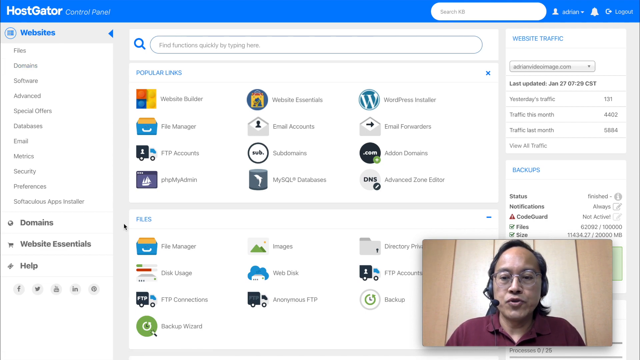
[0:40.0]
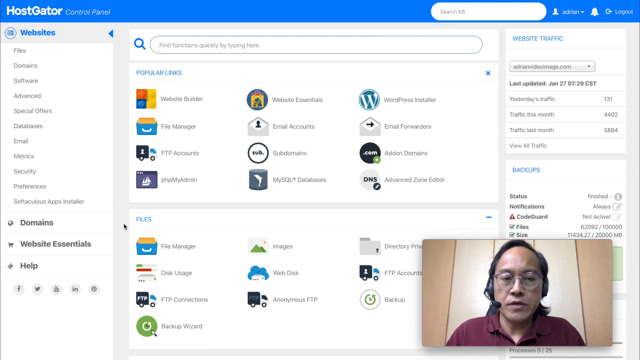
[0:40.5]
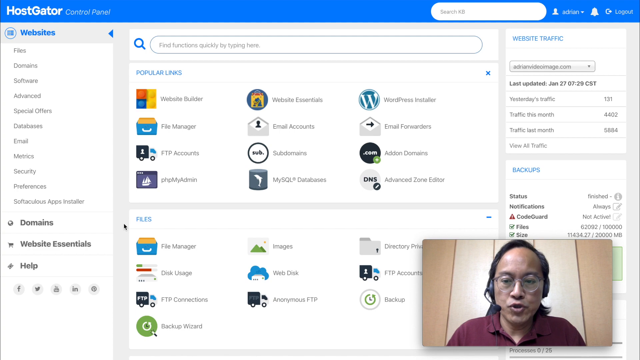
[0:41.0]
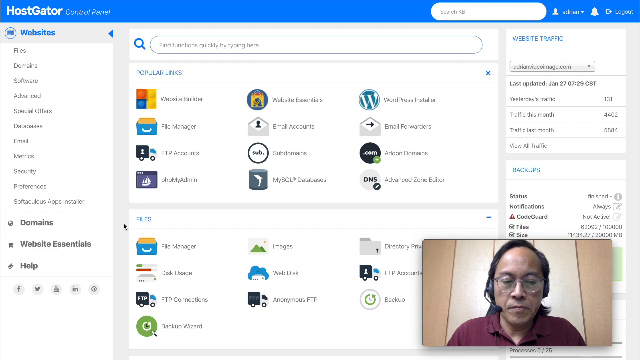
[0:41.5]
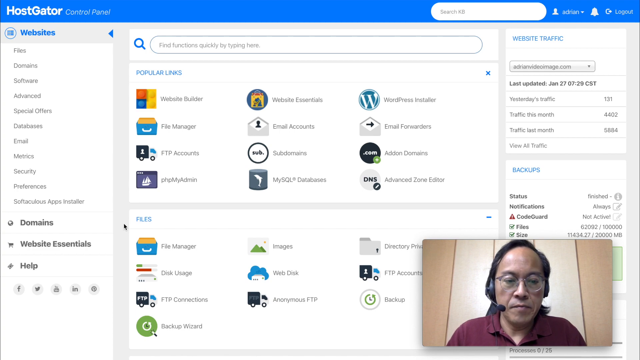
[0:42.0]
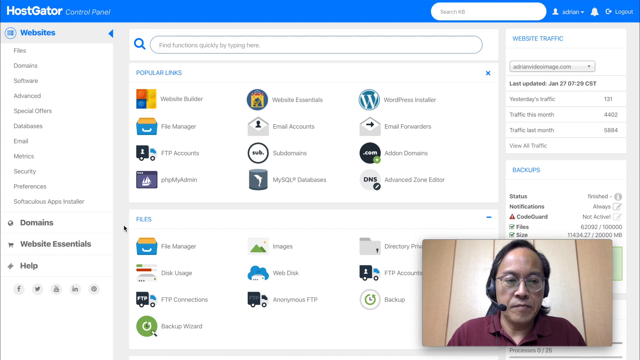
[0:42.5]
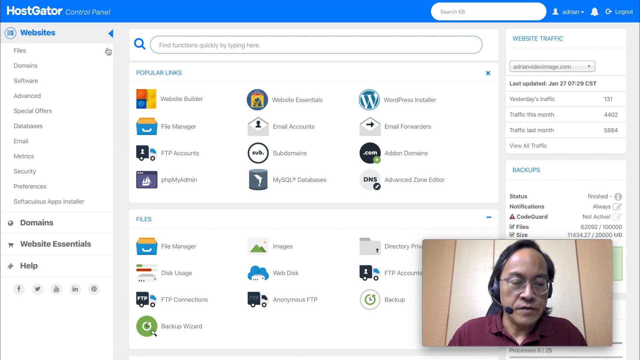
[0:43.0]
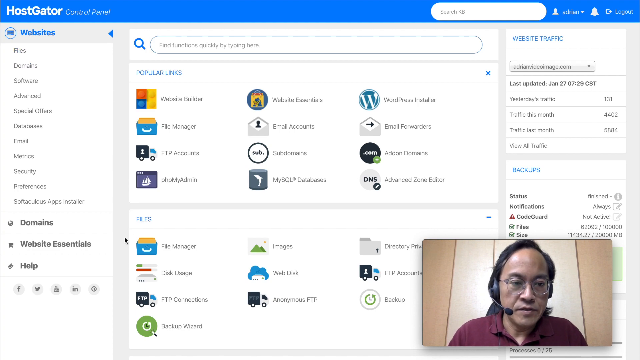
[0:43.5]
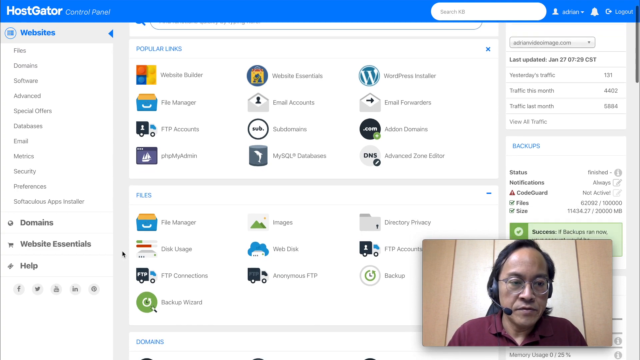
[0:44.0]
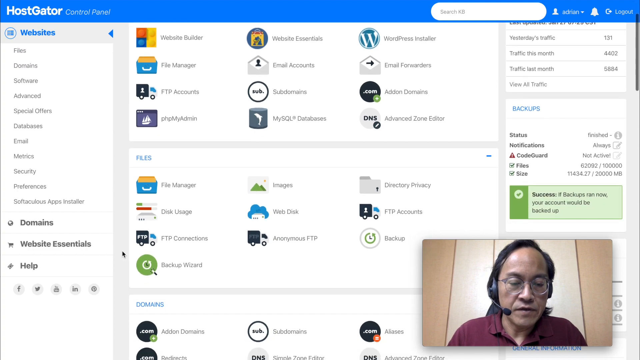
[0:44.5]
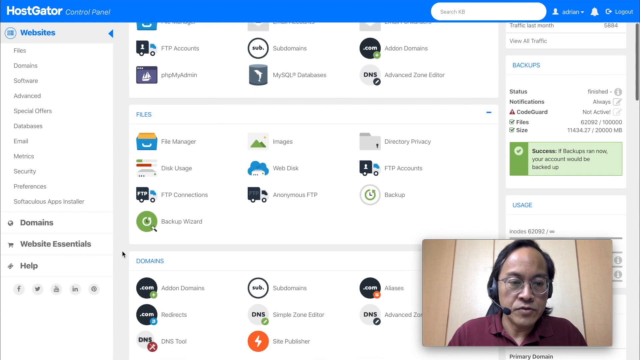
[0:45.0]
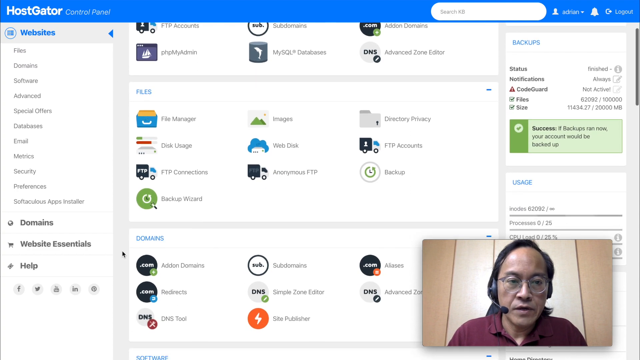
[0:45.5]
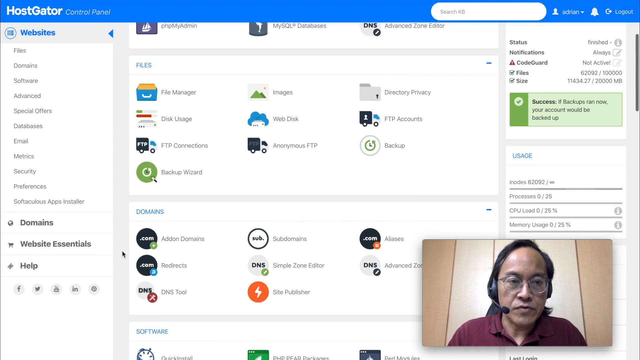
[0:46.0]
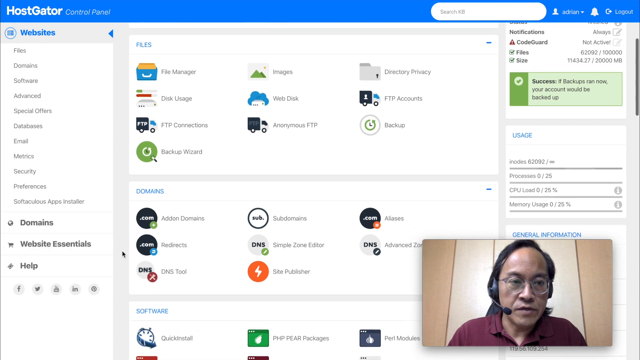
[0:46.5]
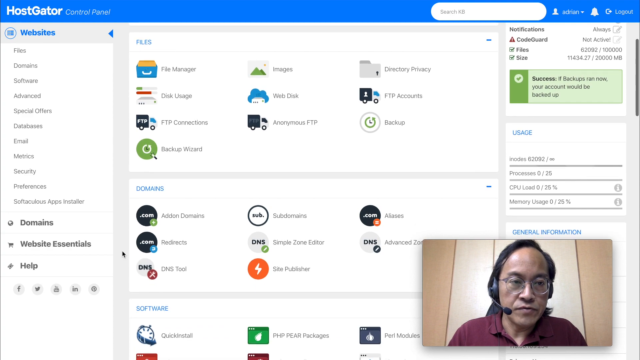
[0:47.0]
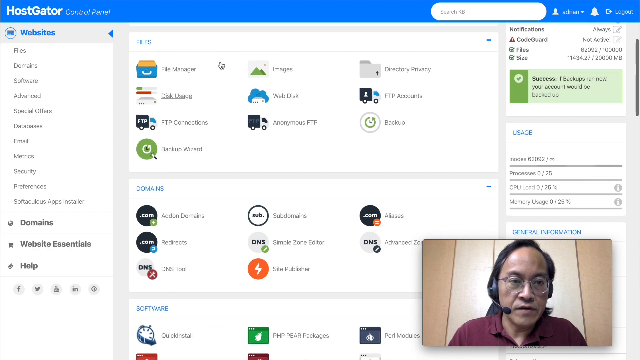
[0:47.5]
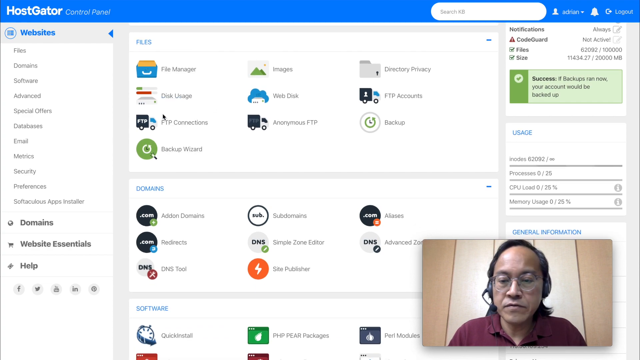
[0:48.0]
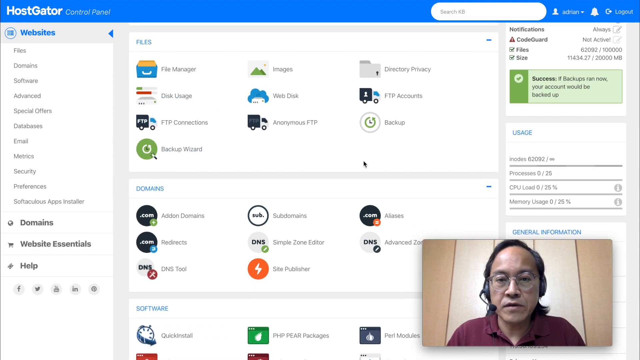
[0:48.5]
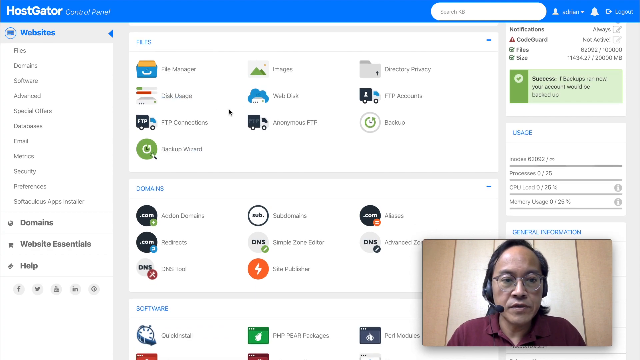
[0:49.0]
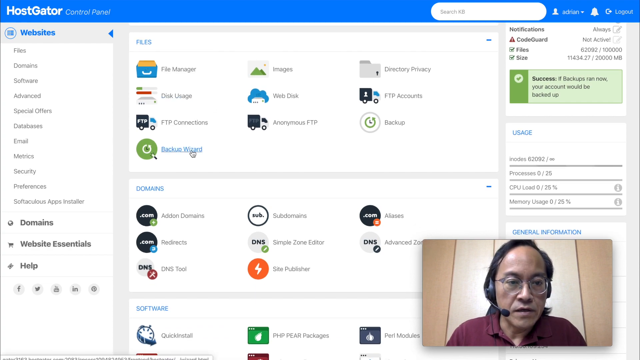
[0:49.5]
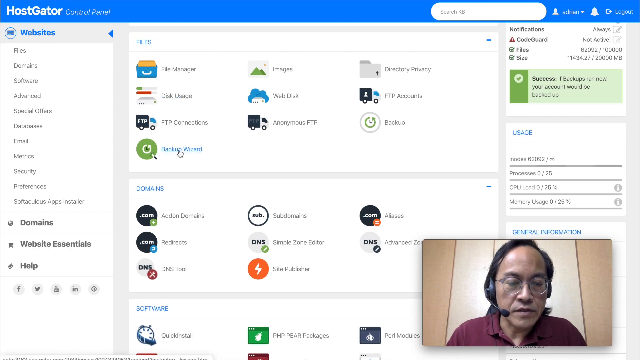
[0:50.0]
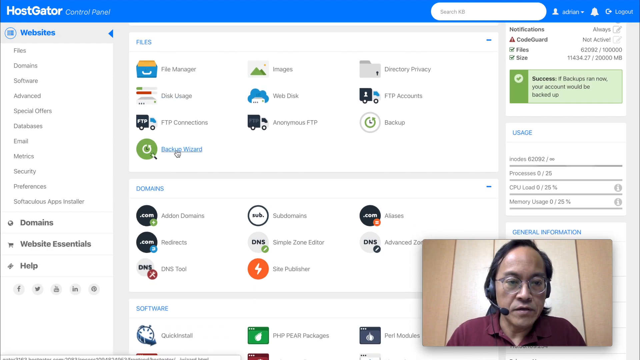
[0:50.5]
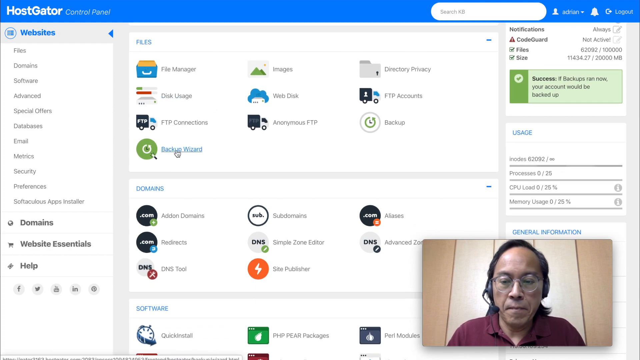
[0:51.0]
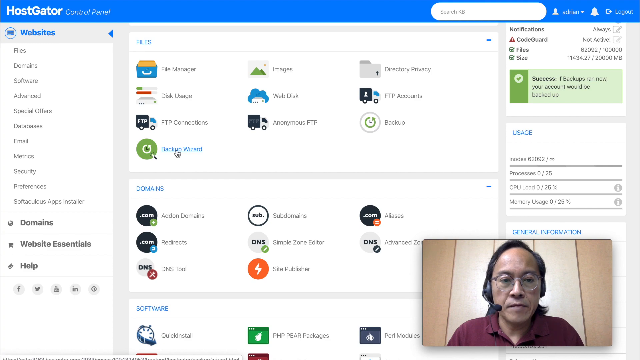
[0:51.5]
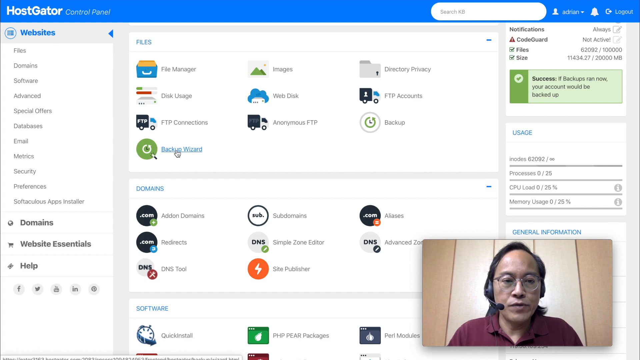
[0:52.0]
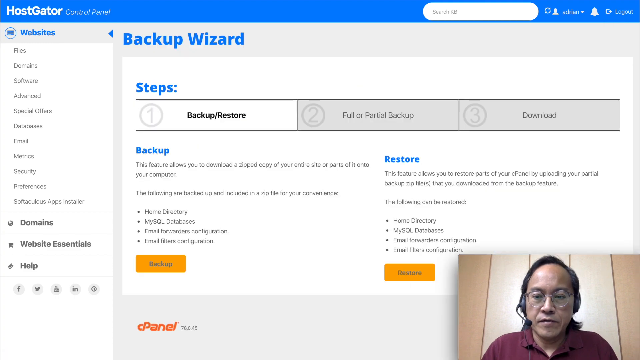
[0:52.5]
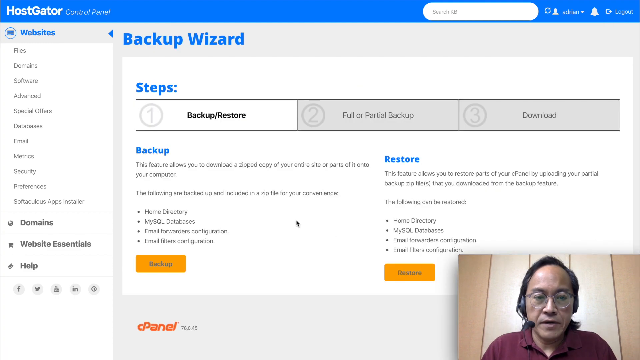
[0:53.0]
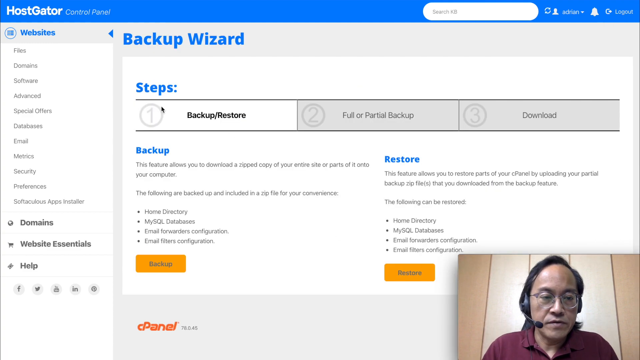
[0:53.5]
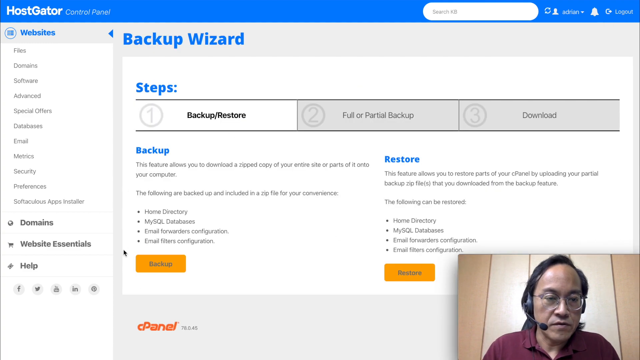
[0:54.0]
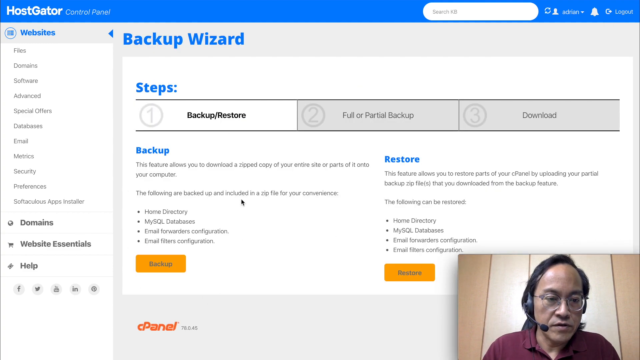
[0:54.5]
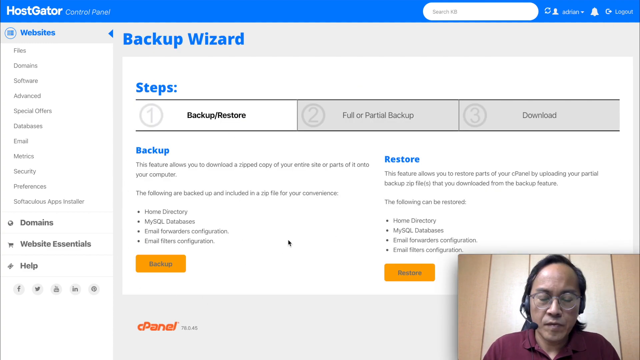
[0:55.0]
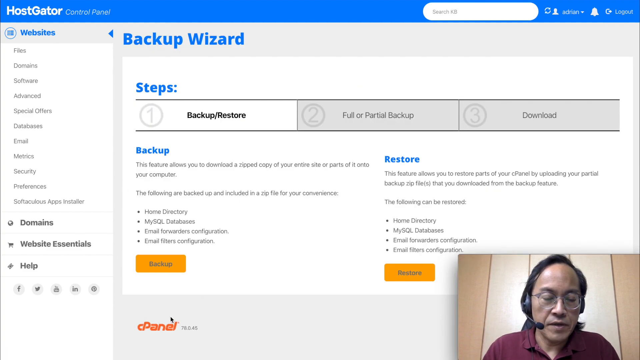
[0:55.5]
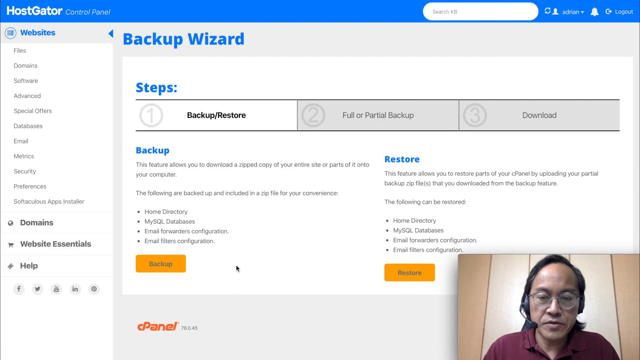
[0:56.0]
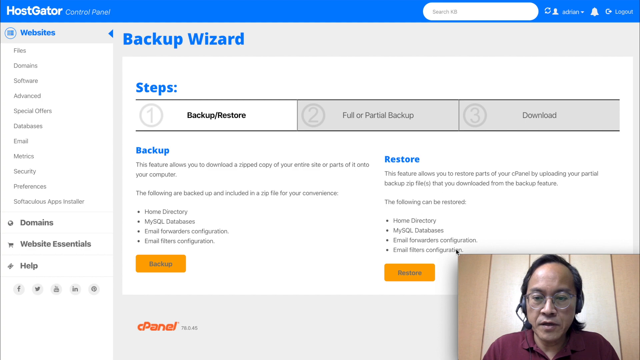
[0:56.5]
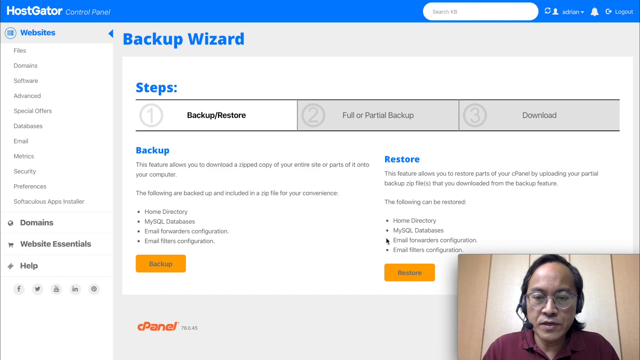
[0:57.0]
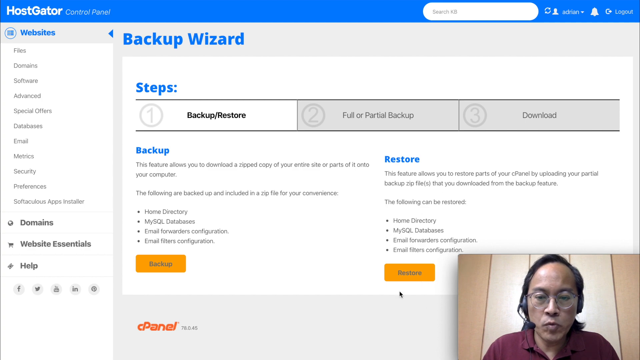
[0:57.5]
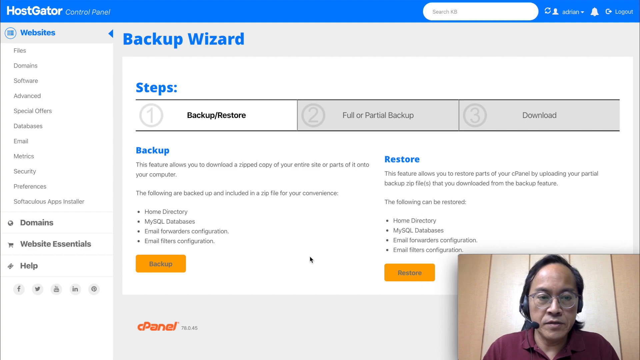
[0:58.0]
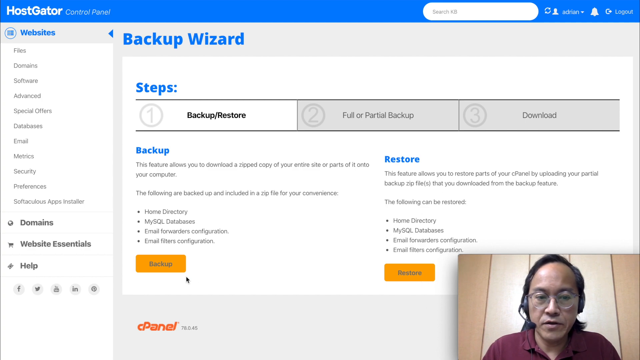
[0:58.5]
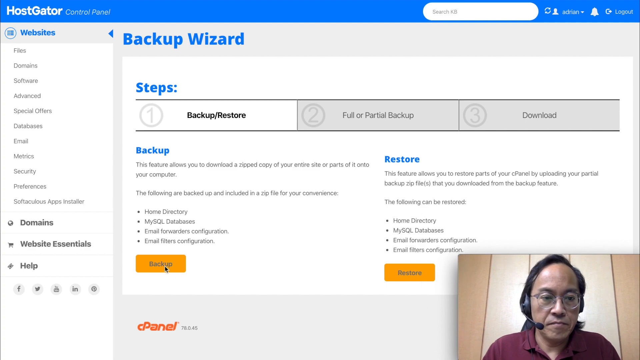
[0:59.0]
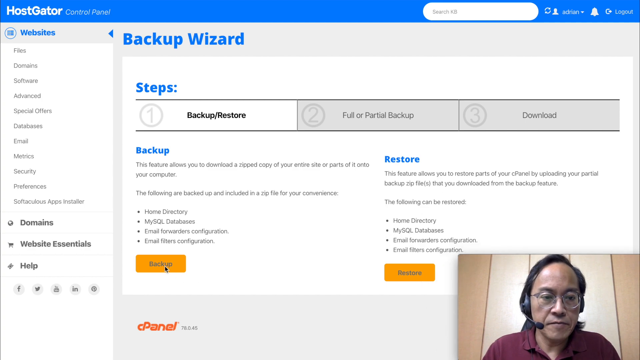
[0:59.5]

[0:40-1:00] The HostGator website shows a "control panel" with popular links and files. A man appears at the bottom of the screen on a webcam, wearing a headset, glasses and a maroon shirt, sitting in a room. He navigates the website, scrolls down, moves the cursor over to "backup wizard" and clicks it. The page reads "backup wizard," with the first step "backup restore," the second step "full or partial backup" and the third step "download." He is about to click a button that reads "back up."